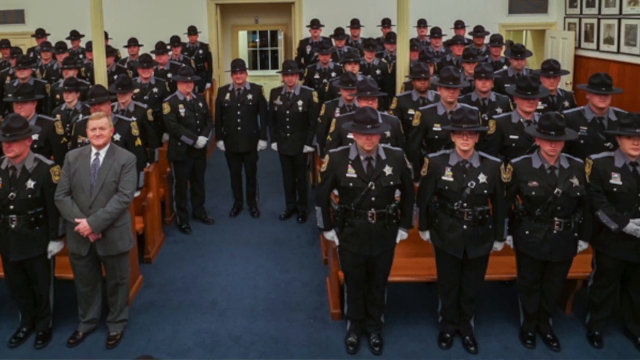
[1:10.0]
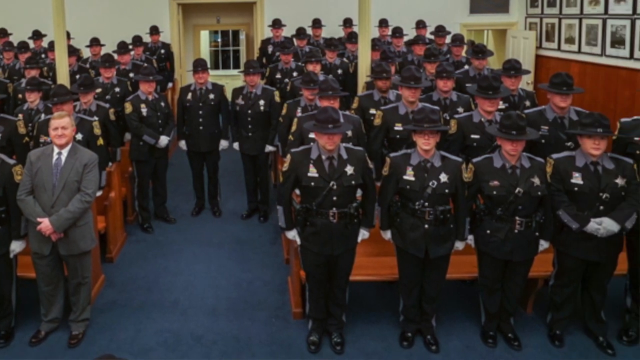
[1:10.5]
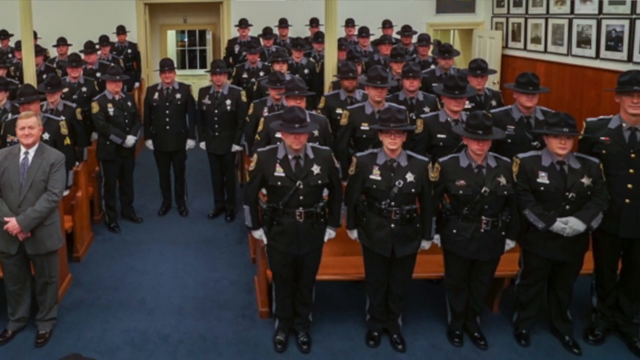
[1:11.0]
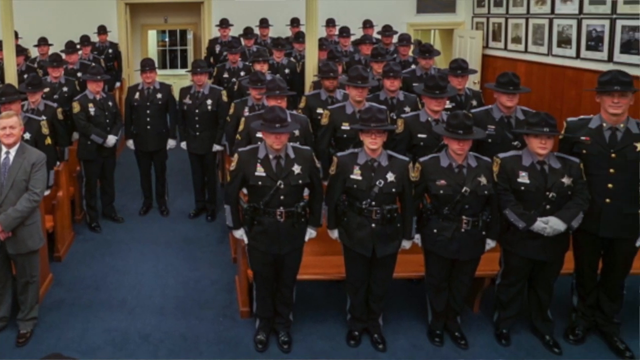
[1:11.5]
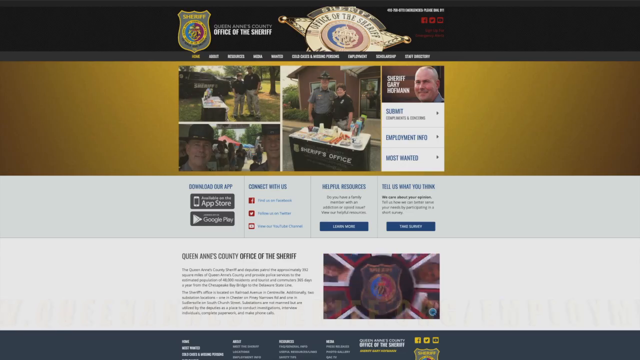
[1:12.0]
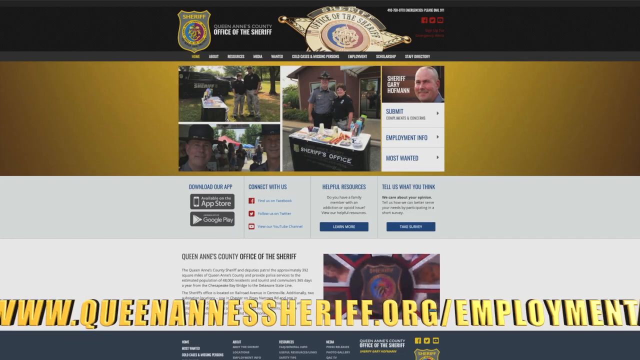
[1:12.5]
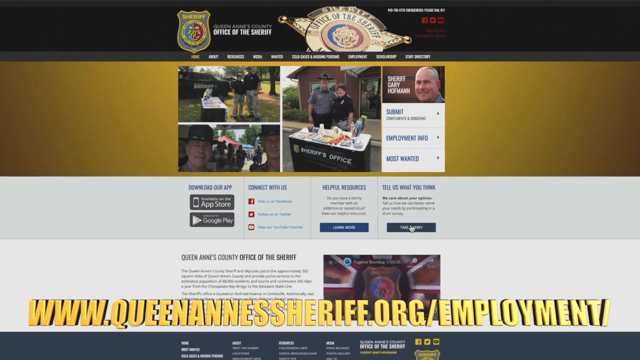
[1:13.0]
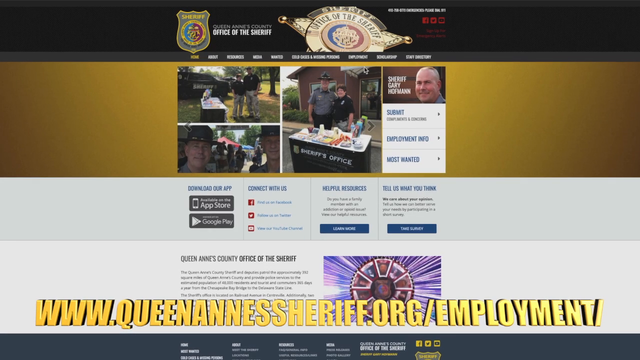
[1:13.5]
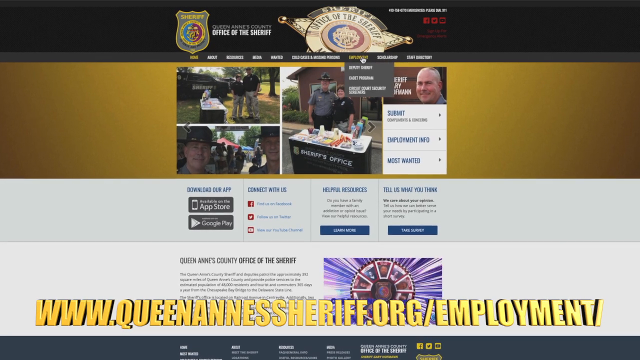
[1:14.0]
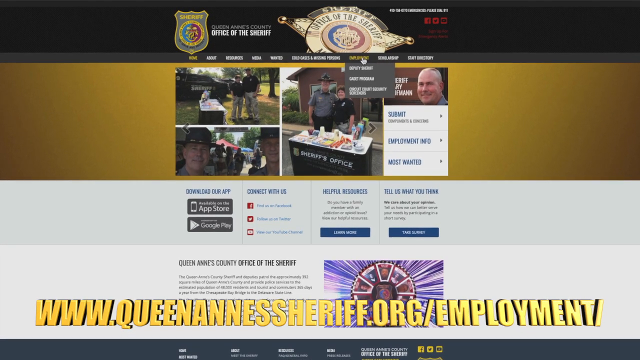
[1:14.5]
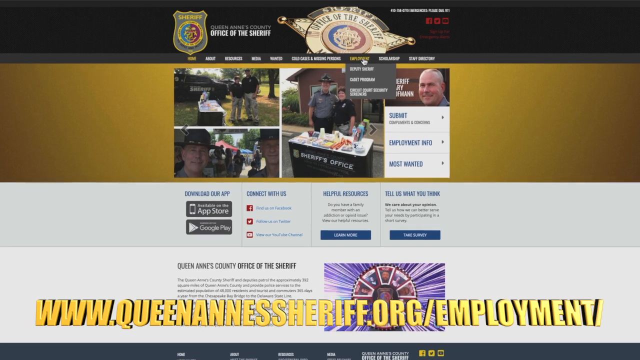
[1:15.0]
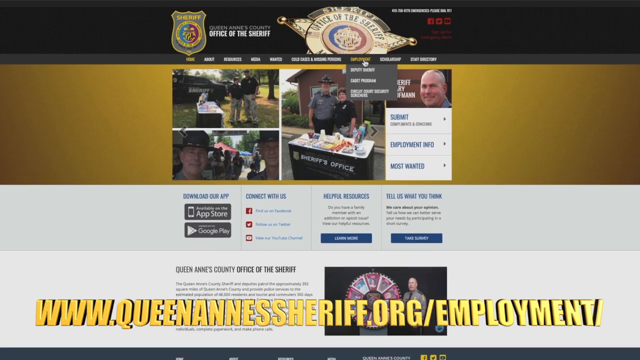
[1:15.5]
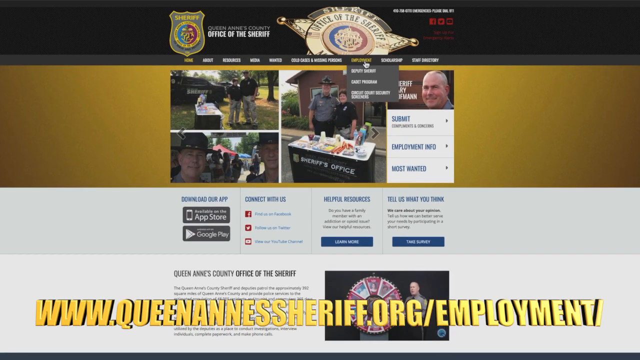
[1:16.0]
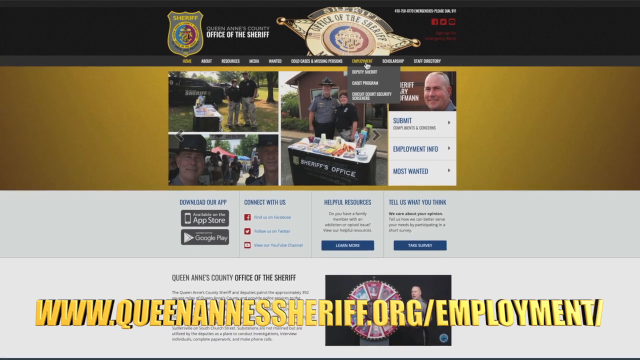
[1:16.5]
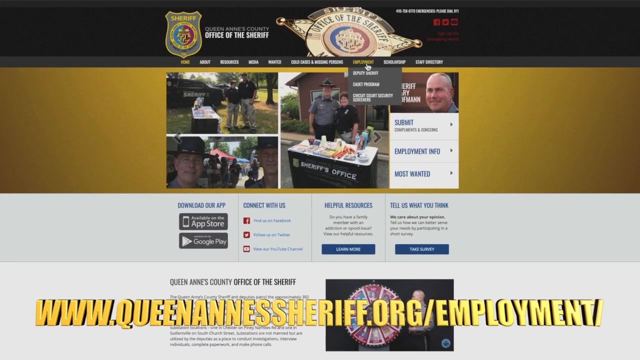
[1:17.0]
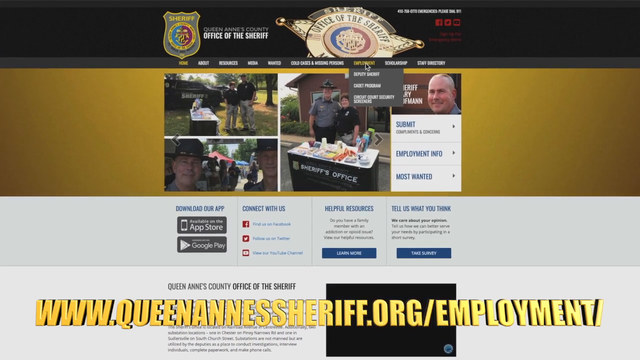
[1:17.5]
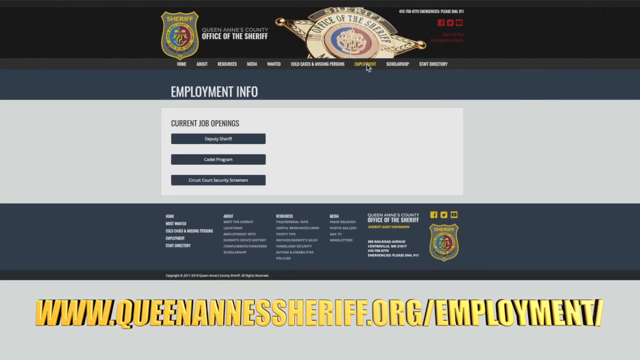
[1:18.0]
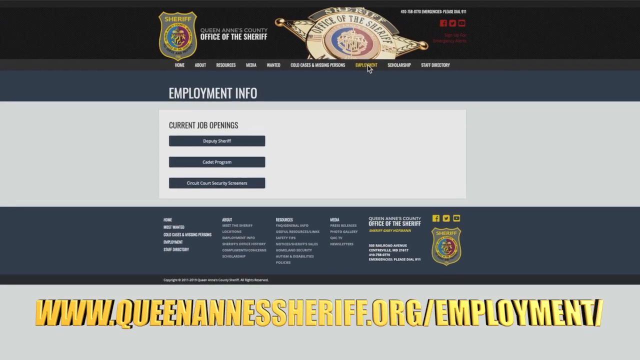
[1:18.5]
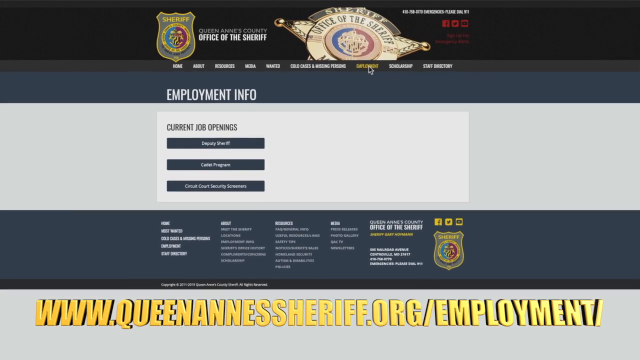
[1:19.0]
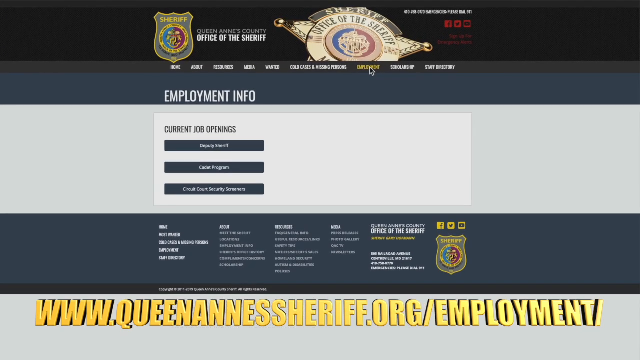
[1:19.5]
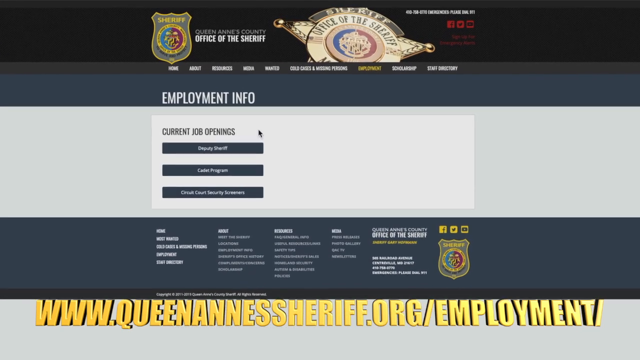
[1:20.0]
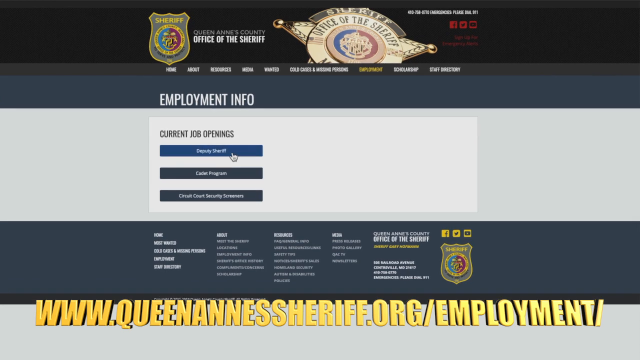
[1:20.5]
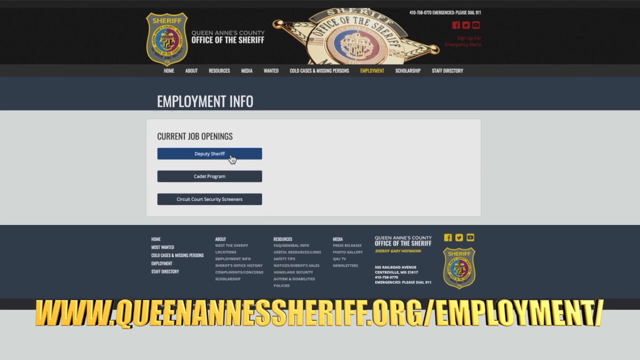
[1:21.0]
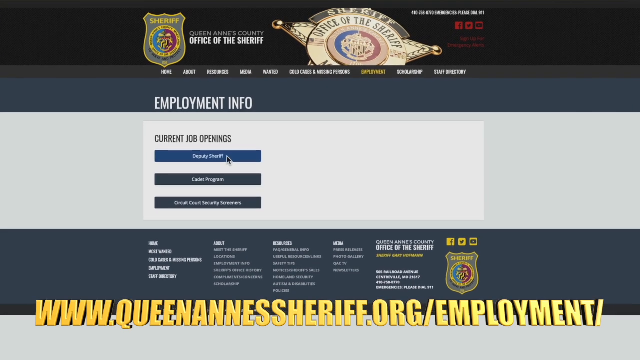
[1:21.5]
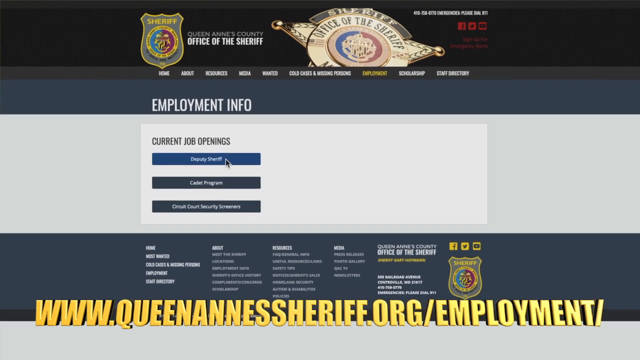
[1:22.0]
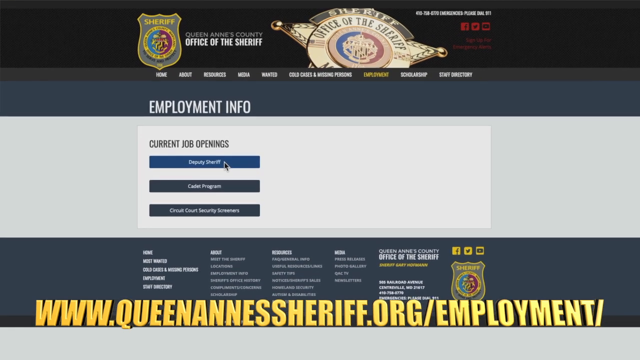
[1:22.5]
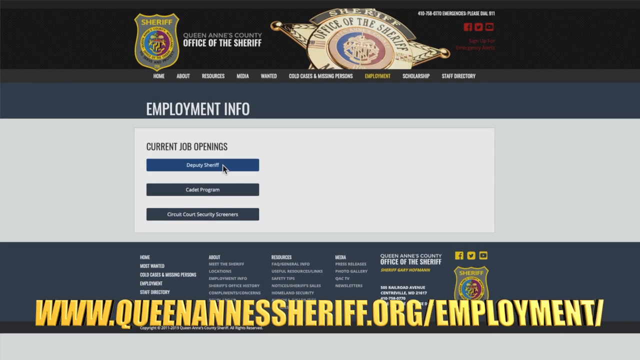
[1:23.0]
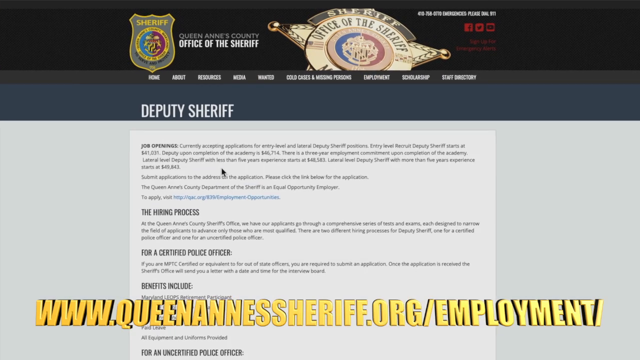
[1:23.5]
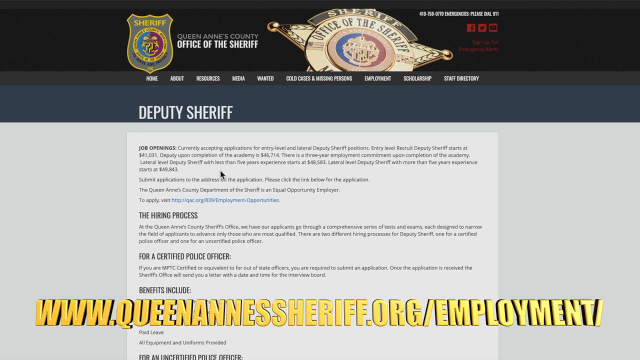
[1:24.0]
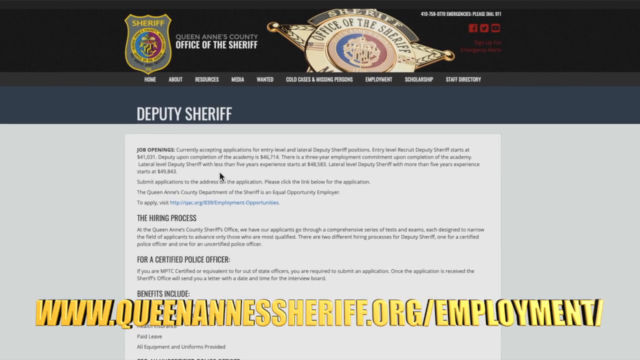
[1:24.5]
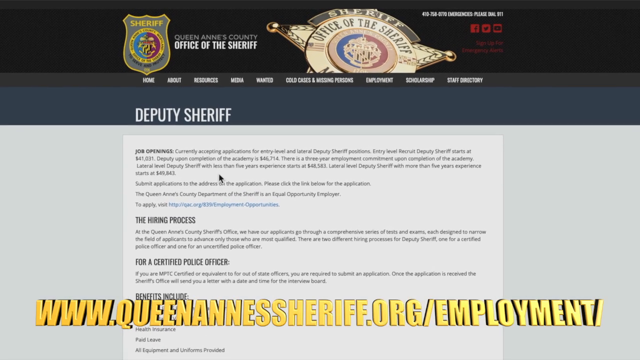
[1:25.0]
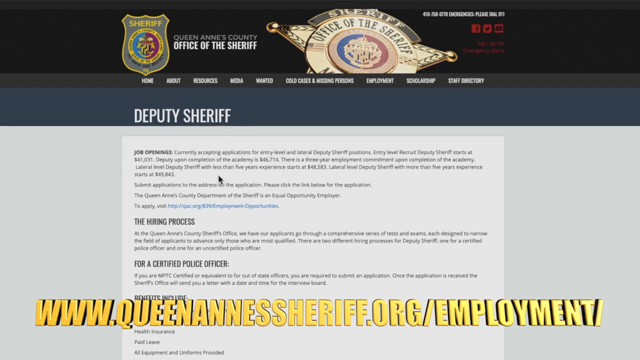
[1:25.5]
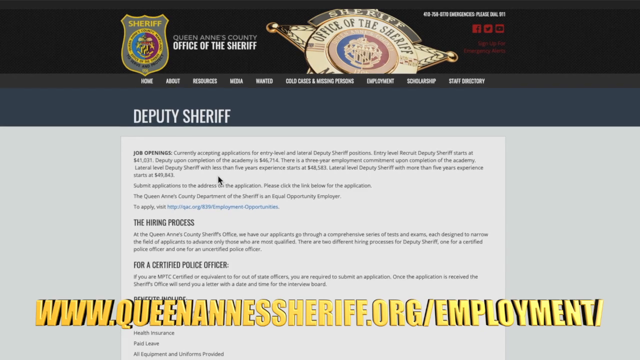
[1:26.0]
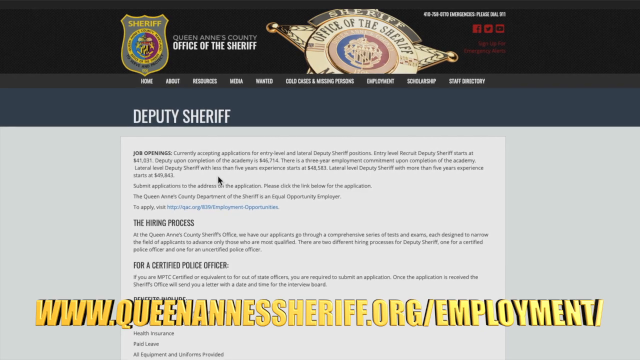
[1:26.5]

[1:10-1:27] A space with a blue floor, kind of cream-colored, is shown with many police officers in view in a sort of academy or group communal meeting. The video then transitions to a screen showing a website employment page, and after a few screen transitions shows the main home page of the website. It is possibly a hiring video for this sheriff's office.